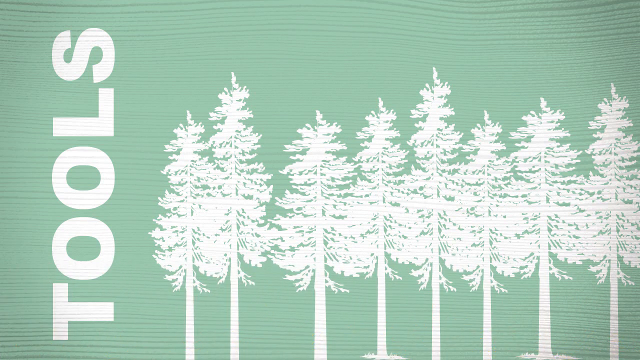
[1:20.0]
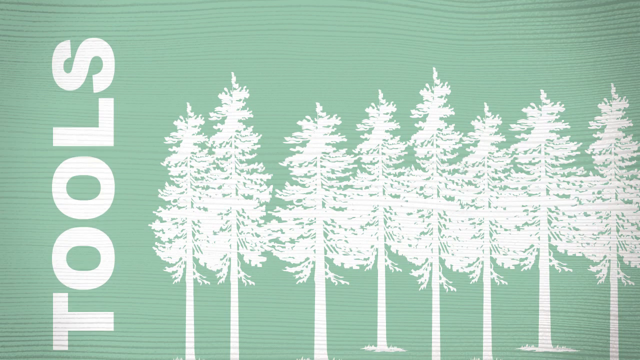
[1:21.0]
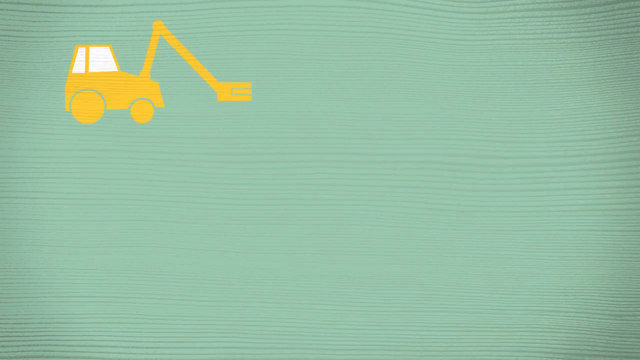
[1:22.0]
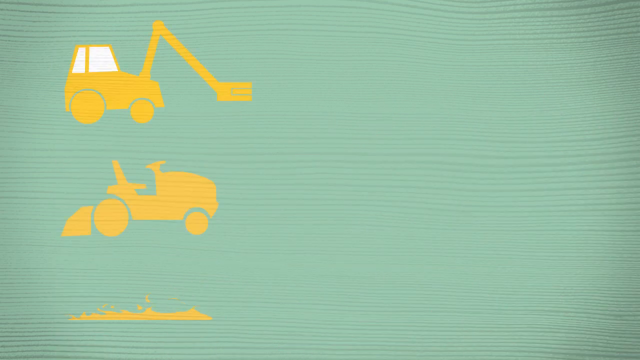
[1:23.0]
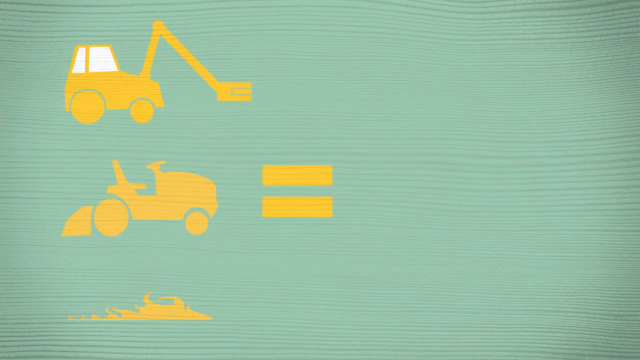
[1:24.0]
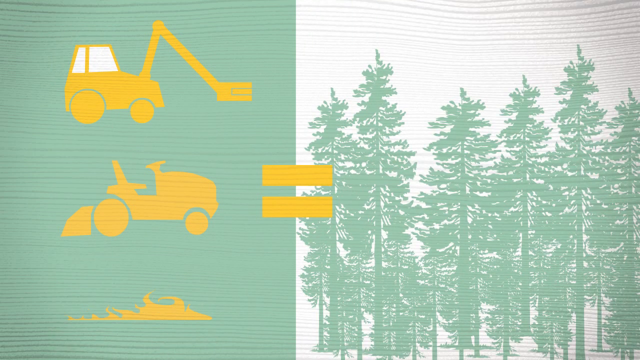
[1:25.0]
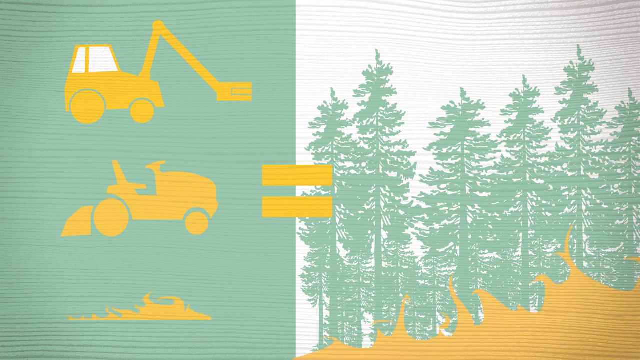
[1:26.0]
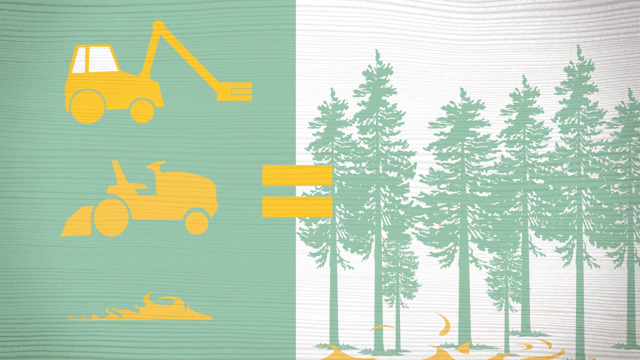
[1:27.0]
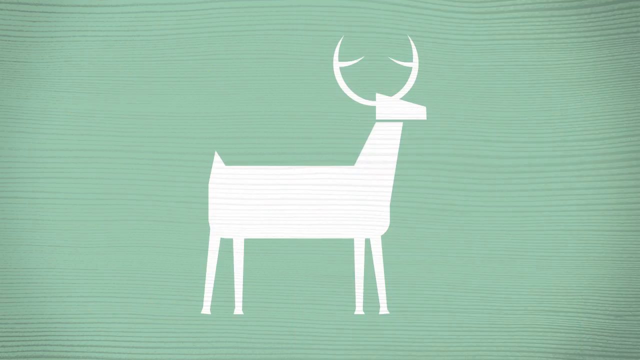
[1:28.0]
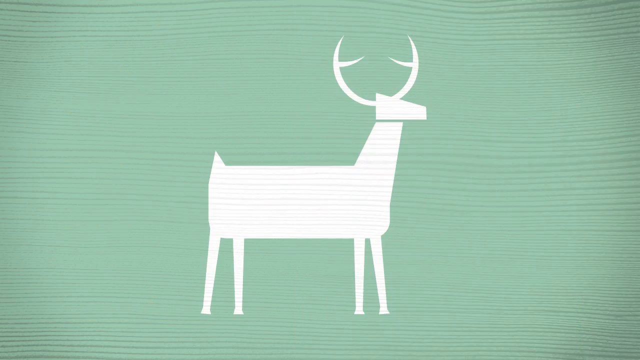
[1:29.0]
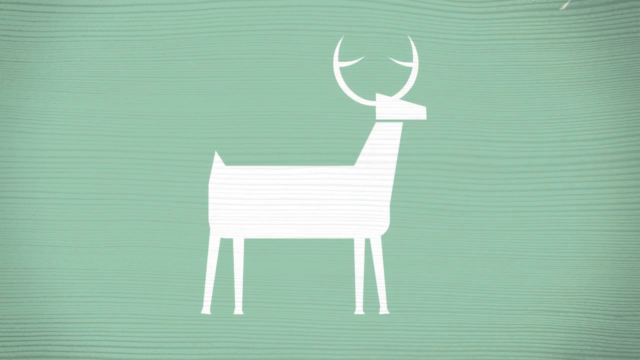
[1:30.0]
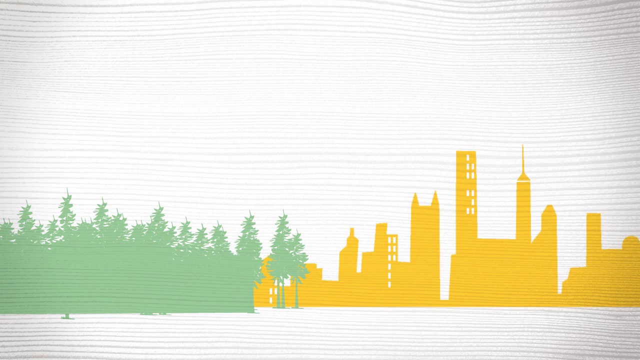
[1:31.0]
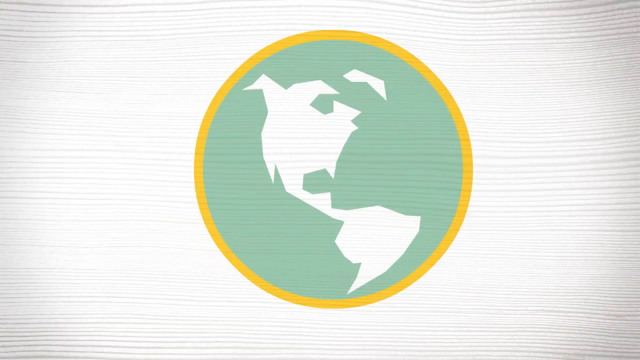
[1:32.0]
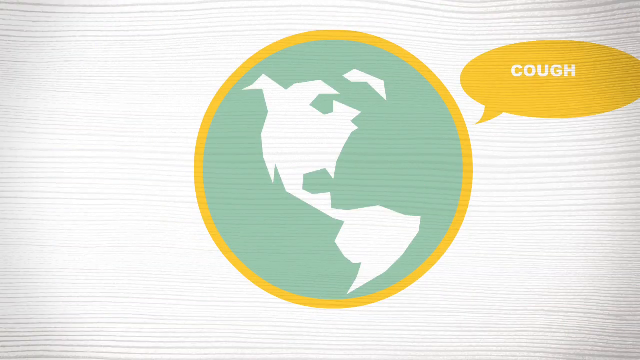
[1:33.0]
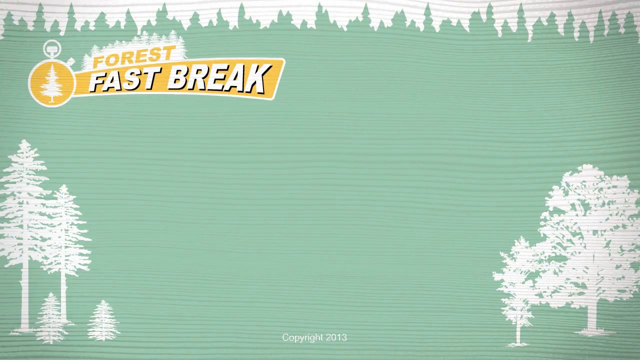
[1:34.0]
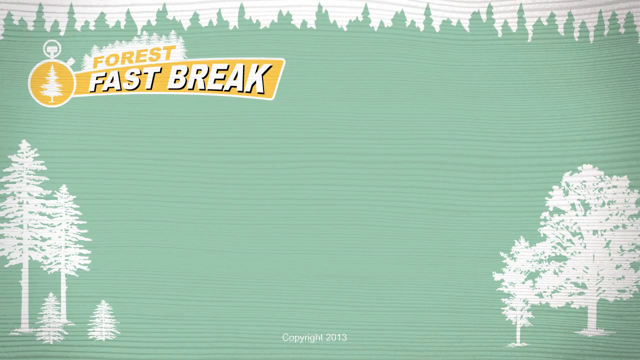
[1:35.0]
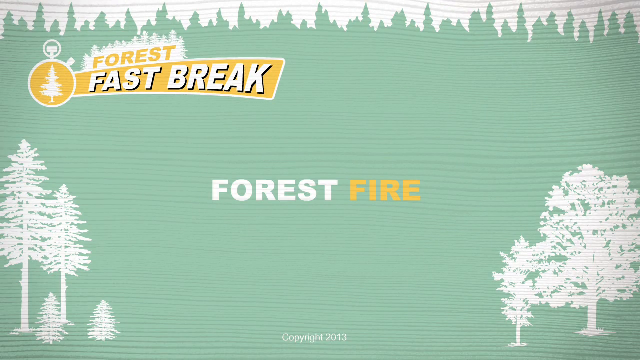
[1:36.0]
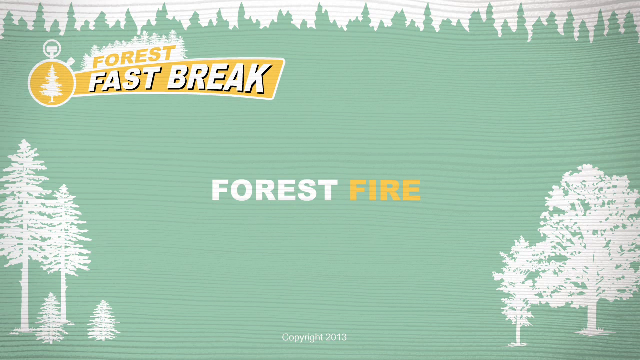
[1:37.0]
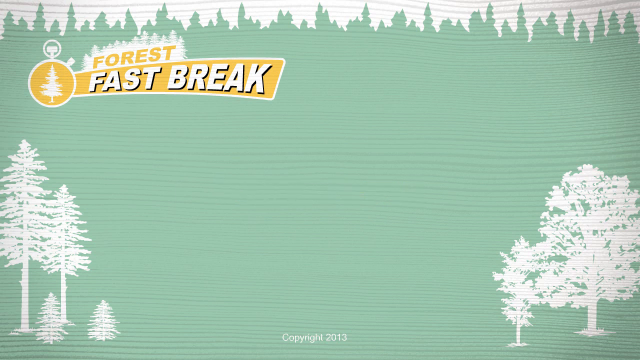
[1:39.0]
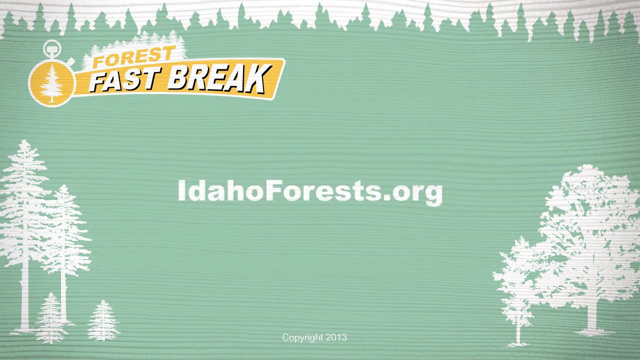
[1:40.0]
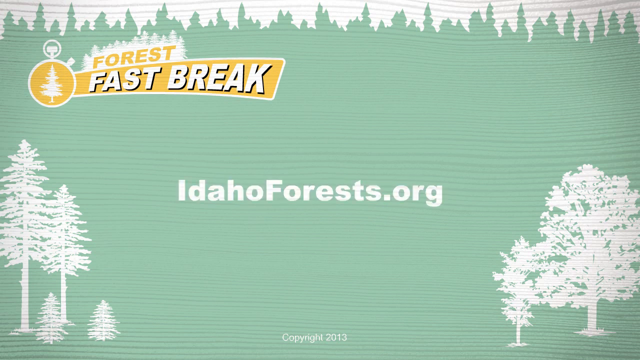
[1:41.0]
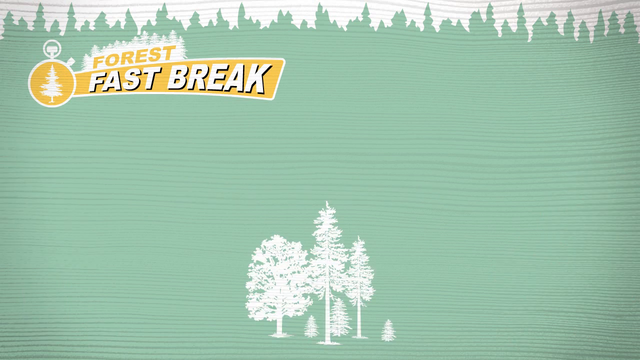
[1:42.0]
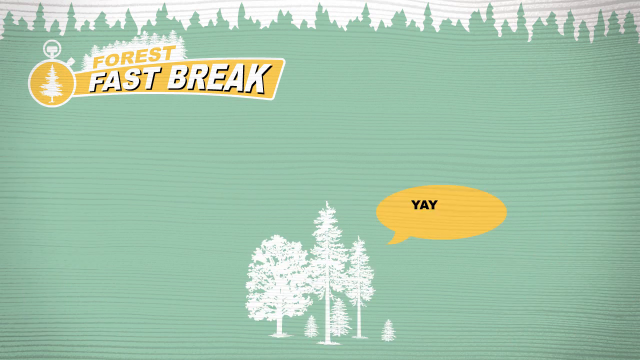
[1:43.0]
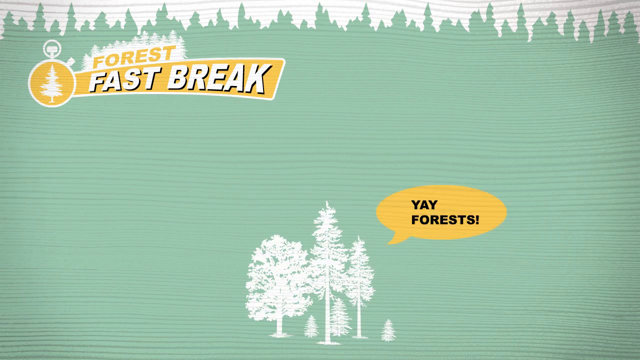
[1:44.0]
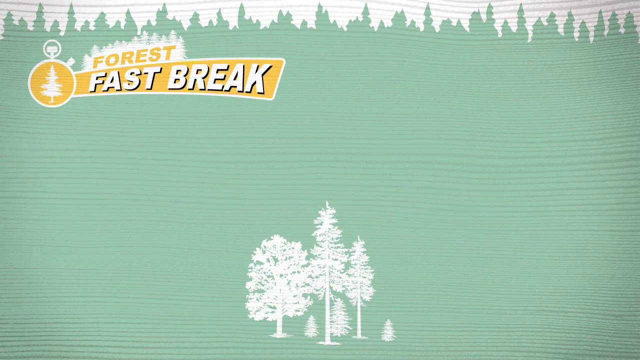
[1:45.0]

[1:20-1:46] The word "tools" appears on the very left of the screen, along with some trees that are quite large, since the smaller trees have been removed. The image then drops down to a tractor crane, followed by a lawnmower and the fire. The fire rises up and takes away all the smaller trees. A silhouette of a buck or an animal with antlers appears, then the city in yellow with trees in teal. The world appears with a chat bubble reading "cough cough." The first screen is shown again: "Forest Fast Break" with trees in the left and right corners and "Forest Fire" in the very middle, along with "Idaho forests.org." Finally, some trees appear with the text "Yay, forests!"